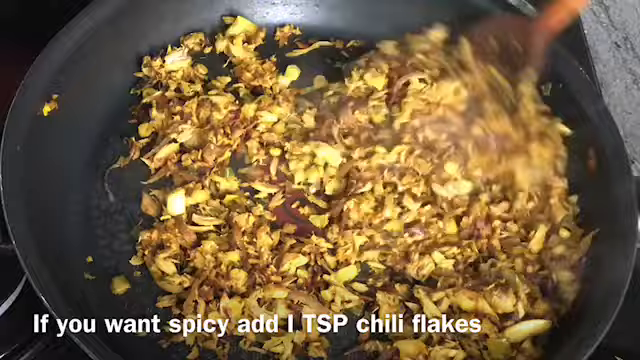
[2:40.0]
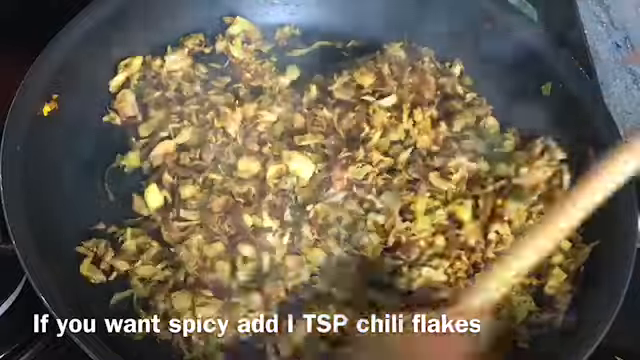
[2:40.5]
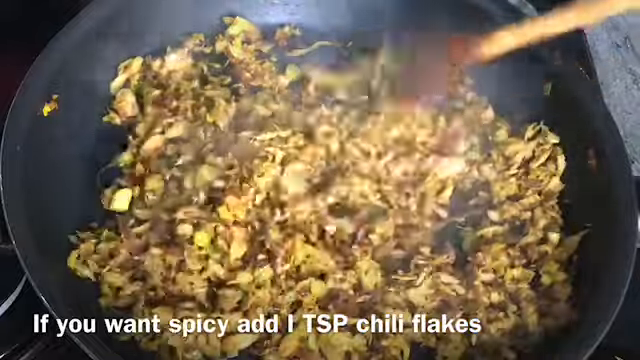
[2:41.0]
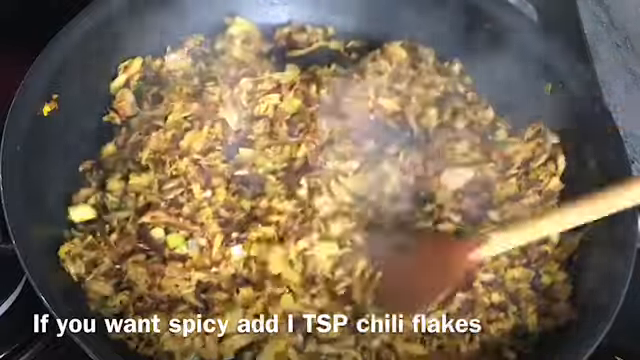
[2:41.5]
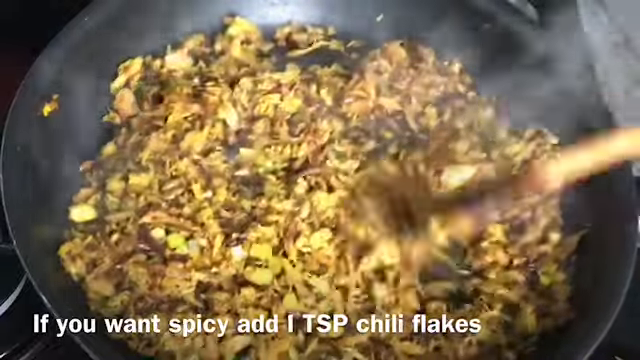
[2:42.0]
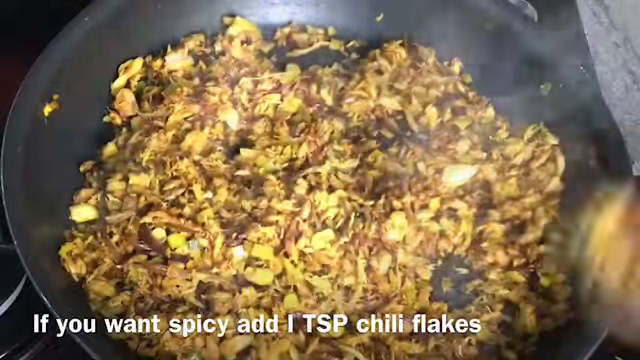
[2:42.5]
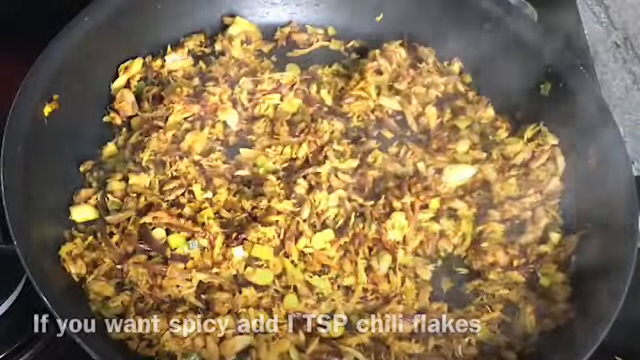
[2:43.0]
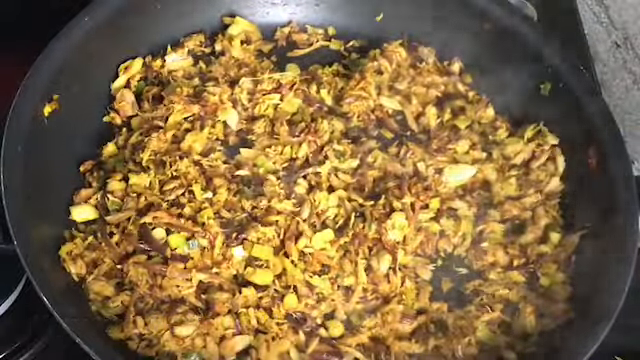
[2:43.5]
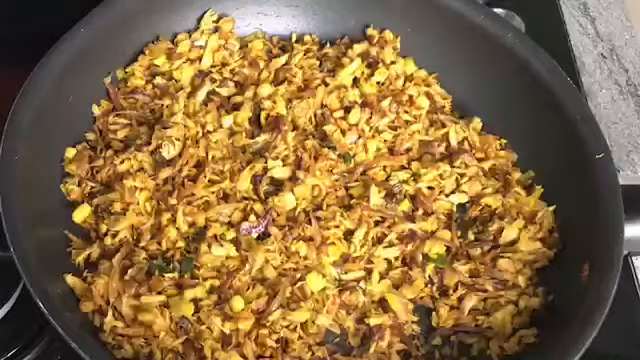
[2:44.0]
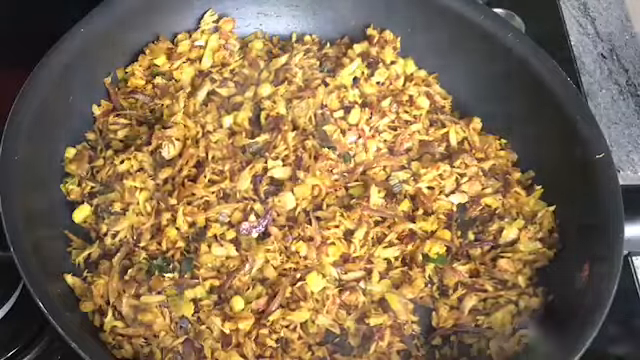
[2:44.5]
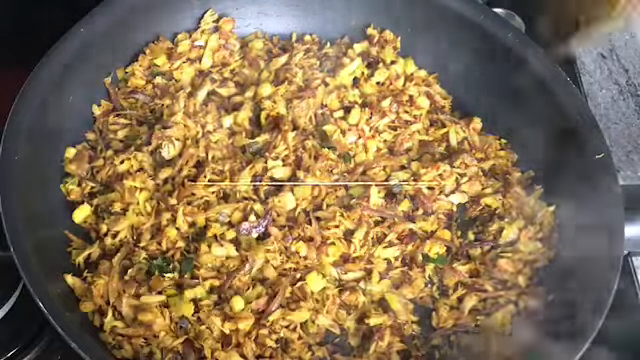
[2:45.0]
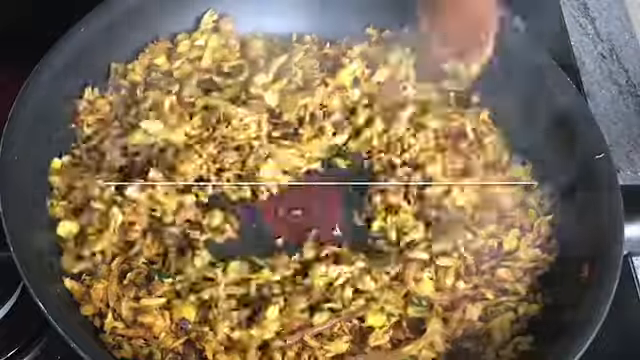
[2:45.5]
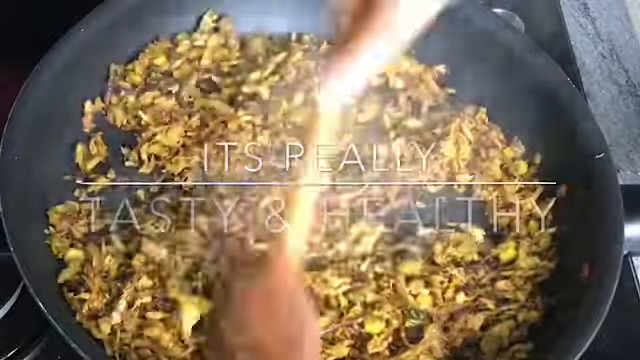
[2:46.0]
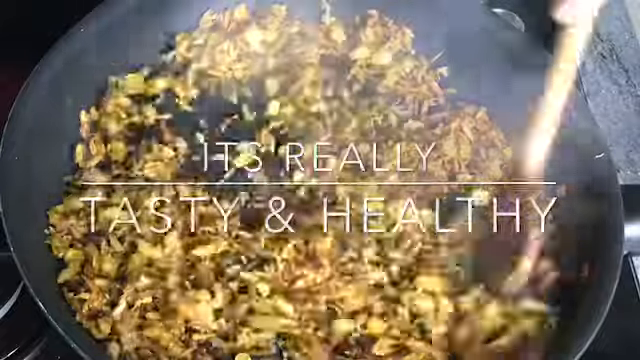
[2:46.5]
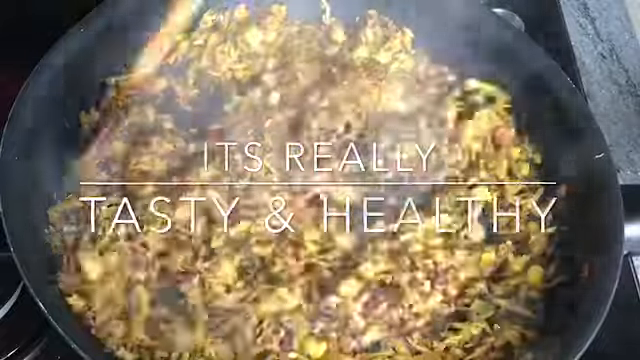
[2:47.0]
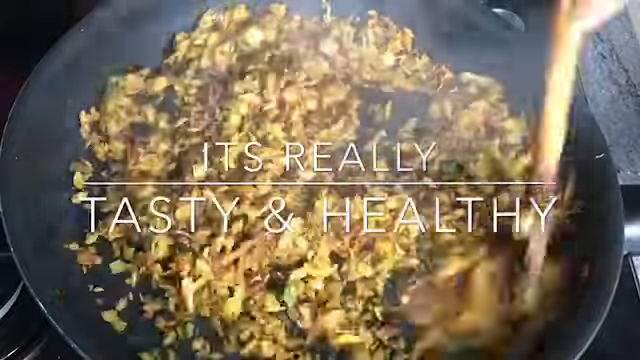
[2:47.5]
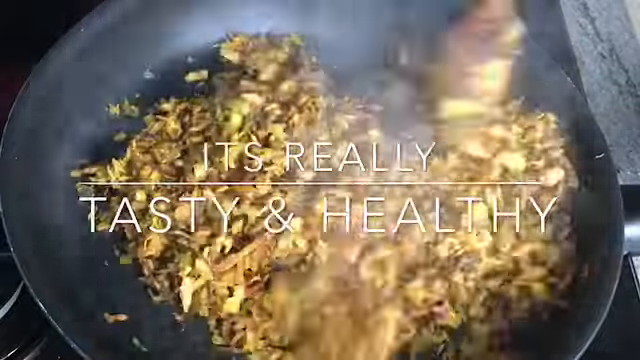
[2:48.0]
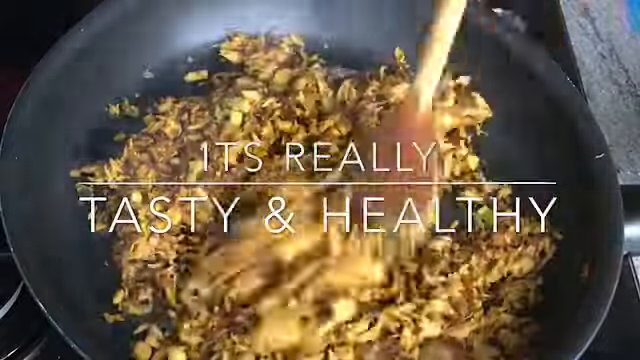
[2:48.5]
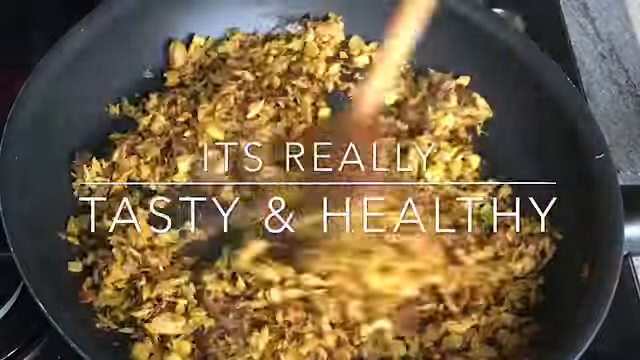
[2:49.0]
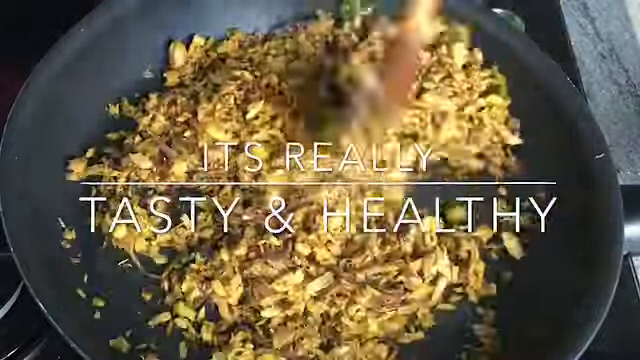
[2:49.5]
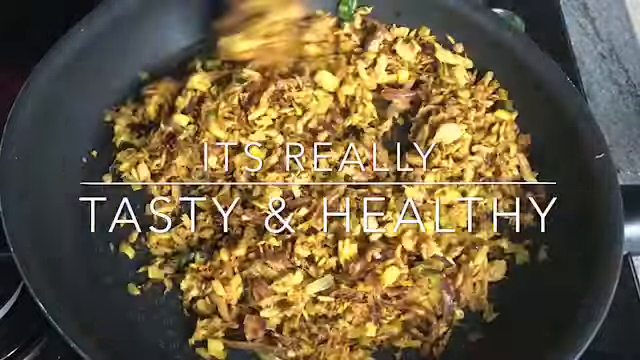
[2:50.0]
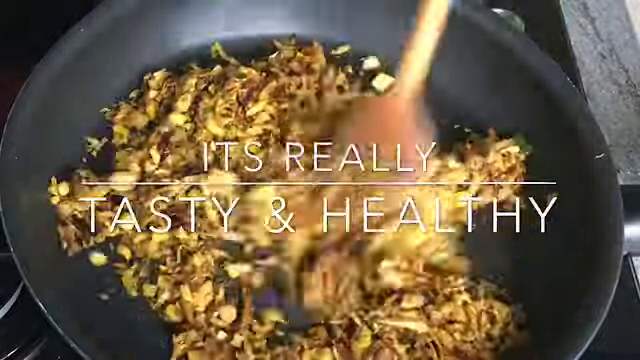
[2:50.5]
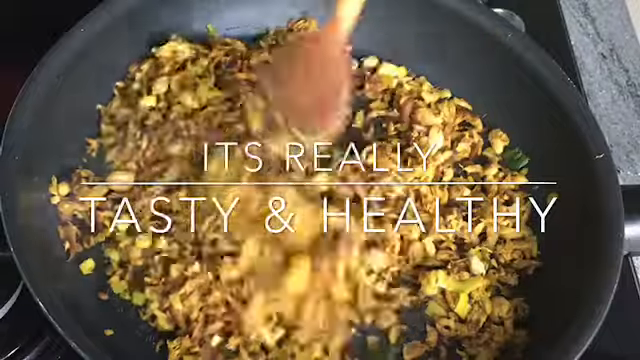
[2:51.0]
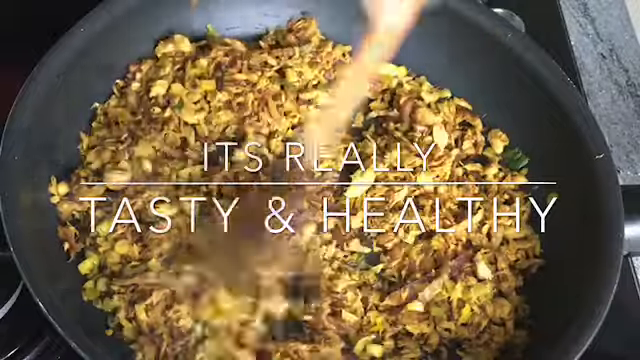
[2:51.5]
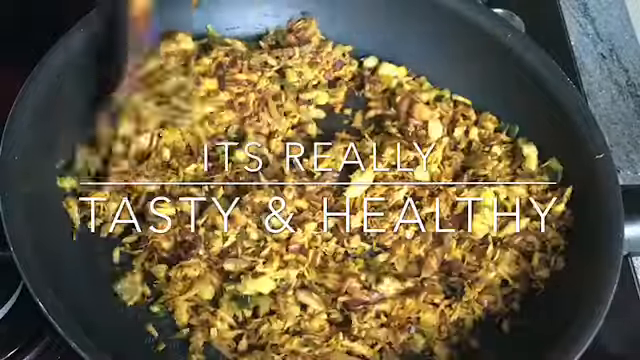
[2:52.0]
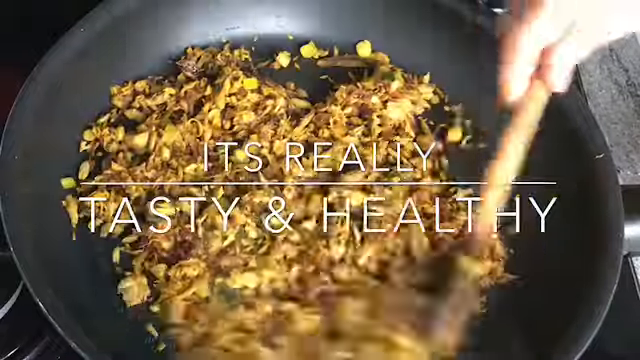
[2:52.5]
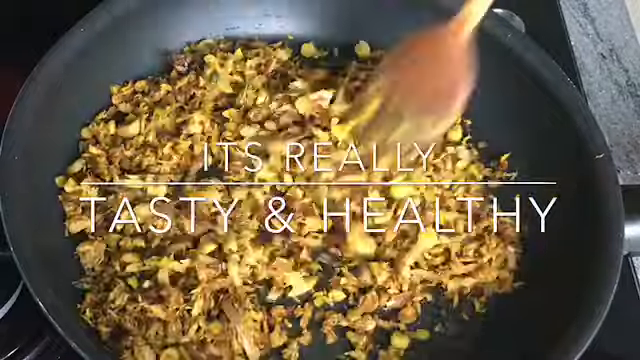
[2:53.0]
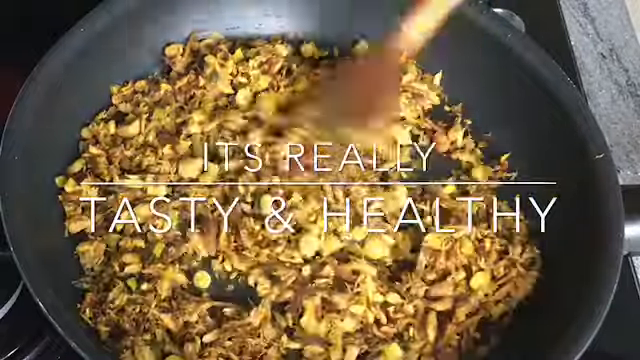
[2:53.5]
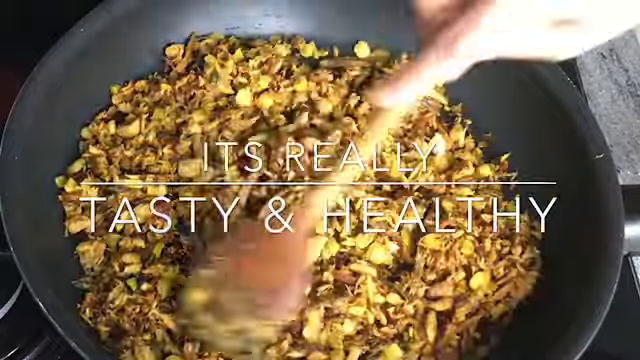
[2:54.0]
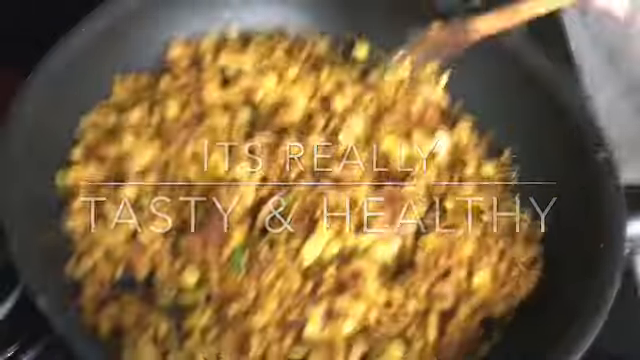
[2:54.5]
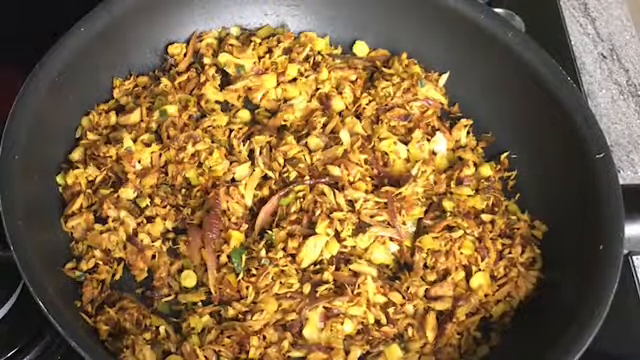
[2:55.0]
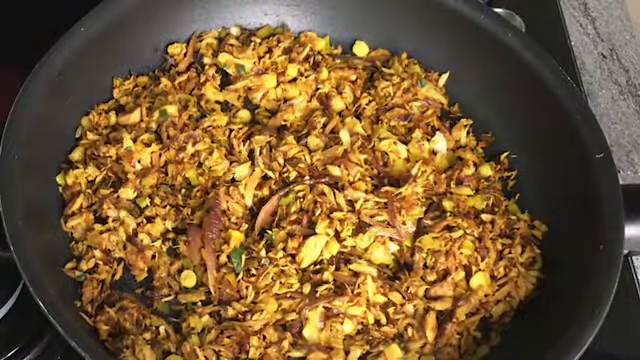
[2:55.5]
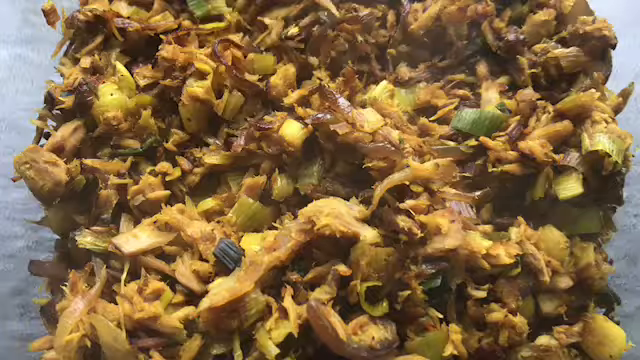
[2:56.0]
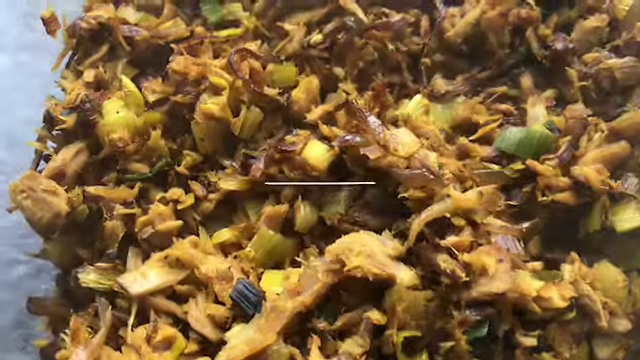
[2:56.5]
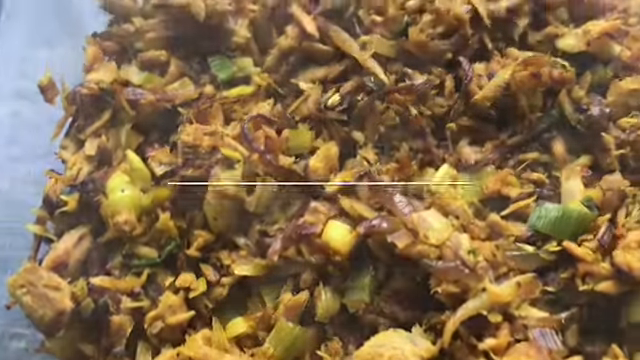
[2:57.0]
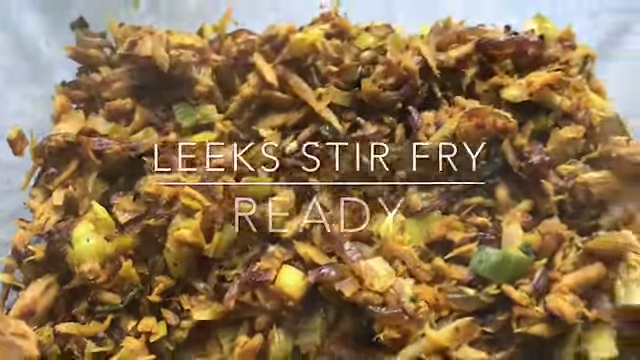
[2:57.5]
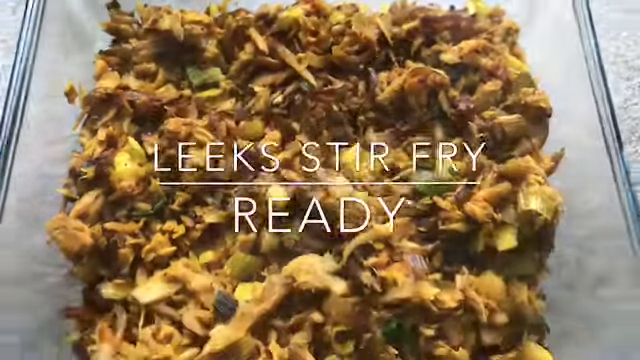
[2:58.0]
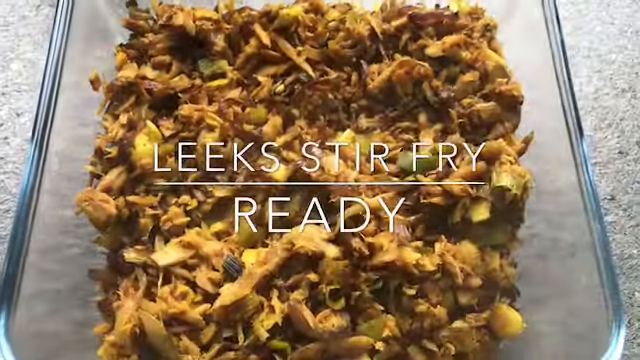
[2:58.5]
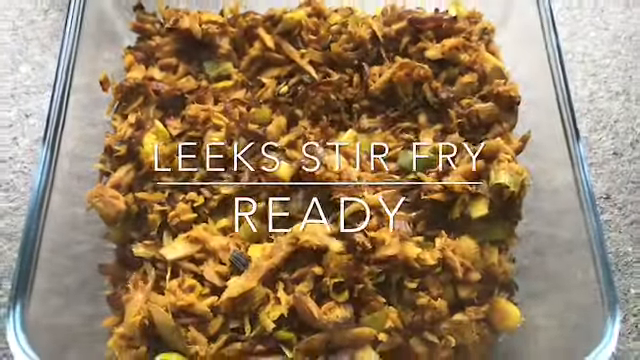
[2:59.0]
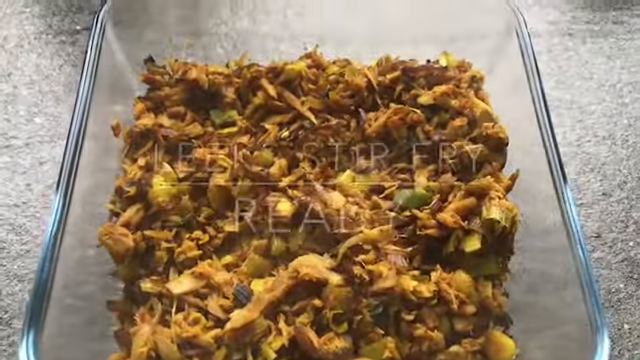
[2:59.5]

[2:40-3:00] There is a little more stirring at the beginning, still in the same black frying pan with the same wooden spoon. Thin white all-caps text, a little hard to read against the background, says "It's really tasty and healthy" and "leeks stir fry ready", with a line between. The video cuts, without showing the transfer, from stirring in the pan to a very zoomed-in close-up of the food in a Pyrex casserole dish, showing it in detail.